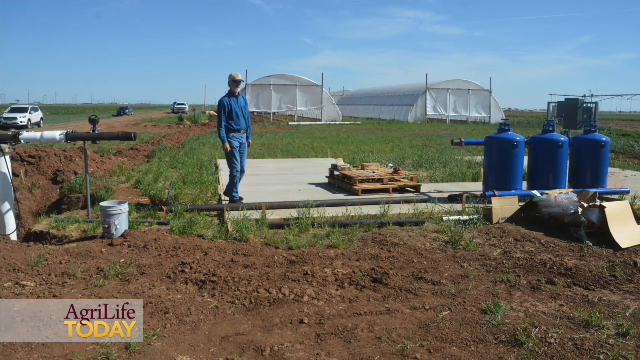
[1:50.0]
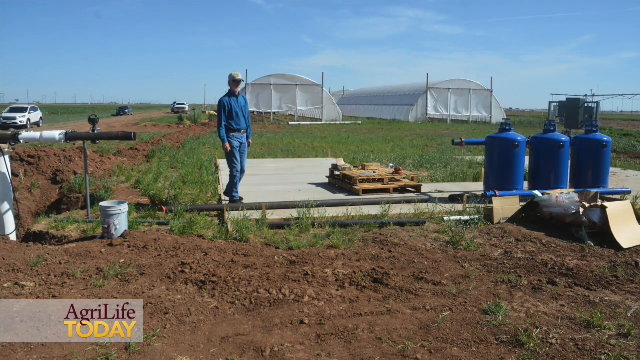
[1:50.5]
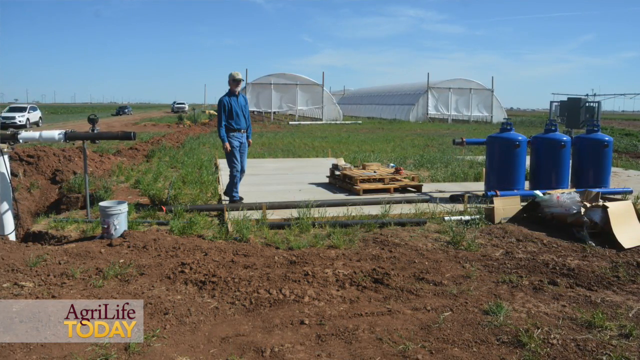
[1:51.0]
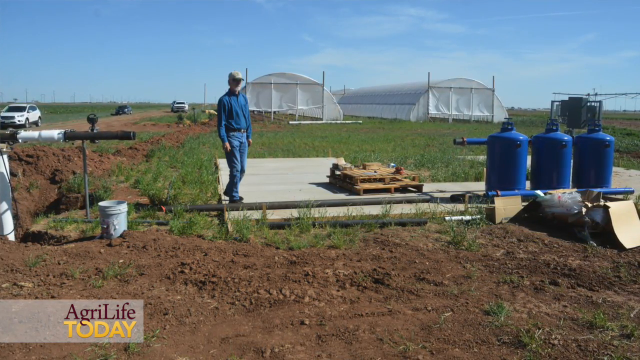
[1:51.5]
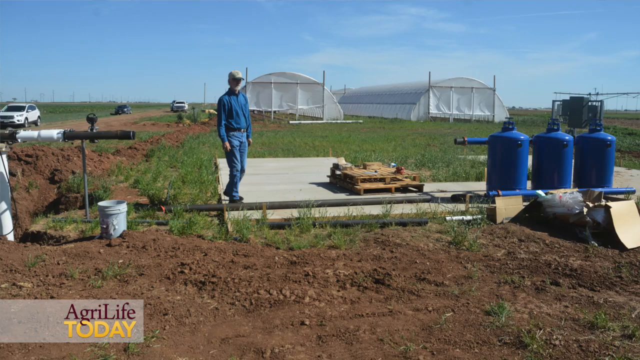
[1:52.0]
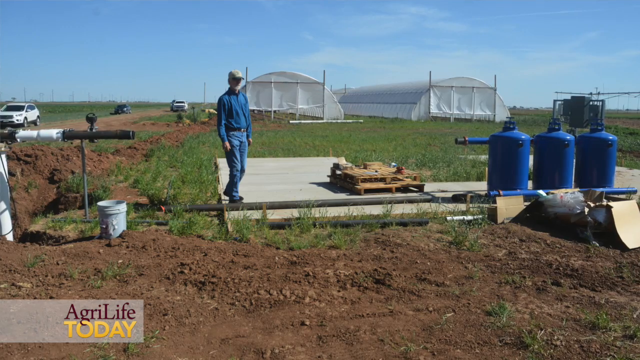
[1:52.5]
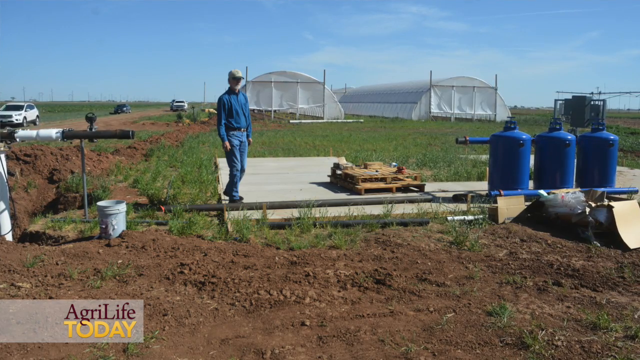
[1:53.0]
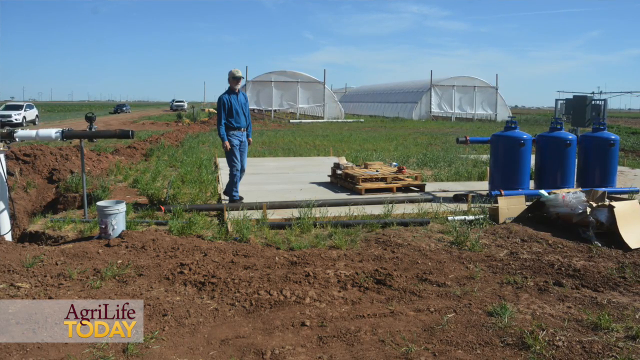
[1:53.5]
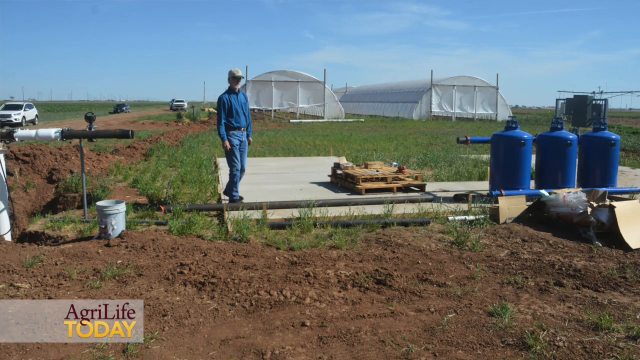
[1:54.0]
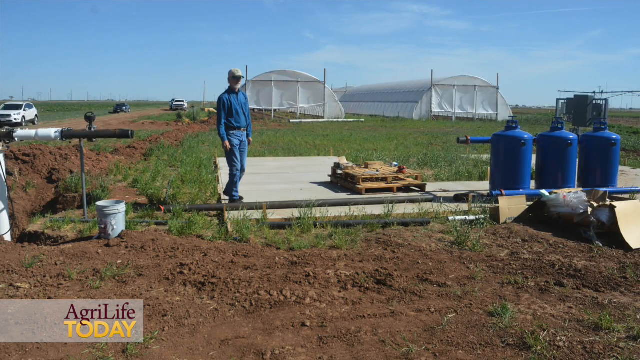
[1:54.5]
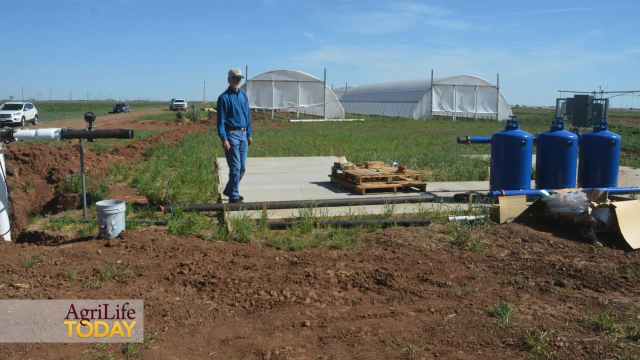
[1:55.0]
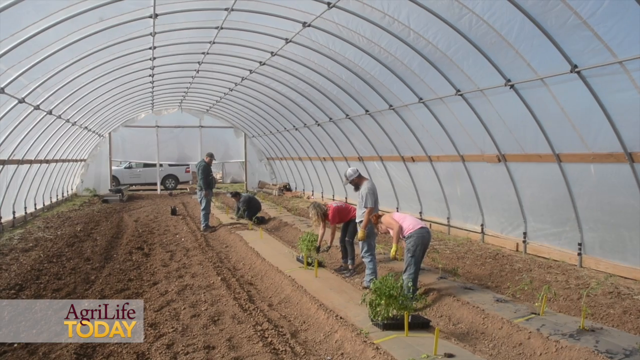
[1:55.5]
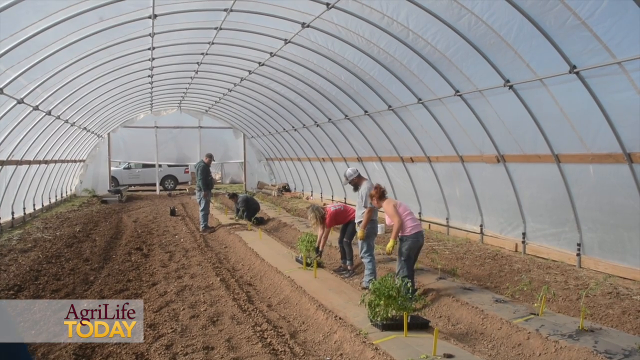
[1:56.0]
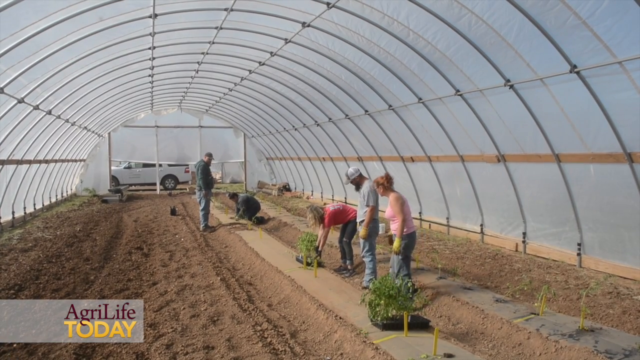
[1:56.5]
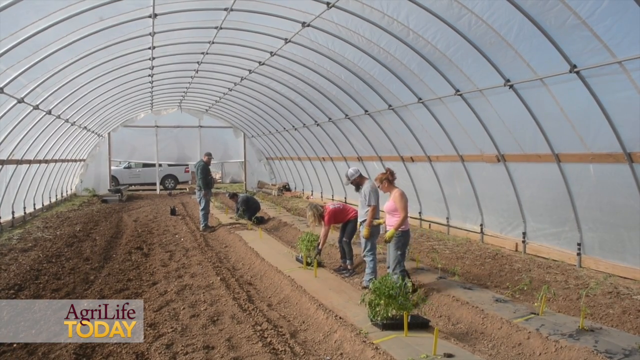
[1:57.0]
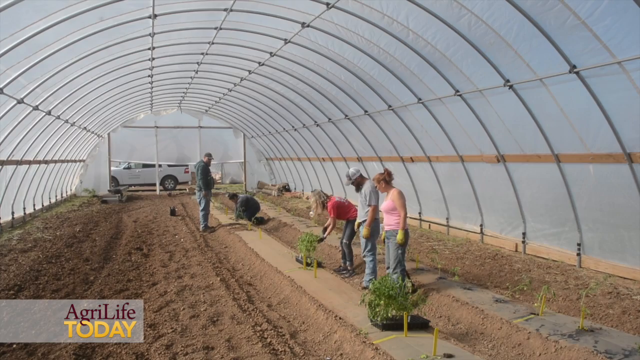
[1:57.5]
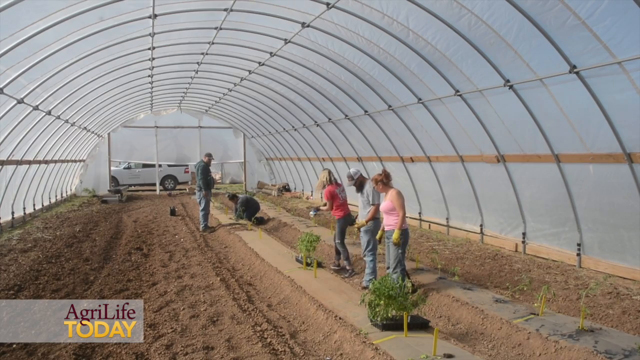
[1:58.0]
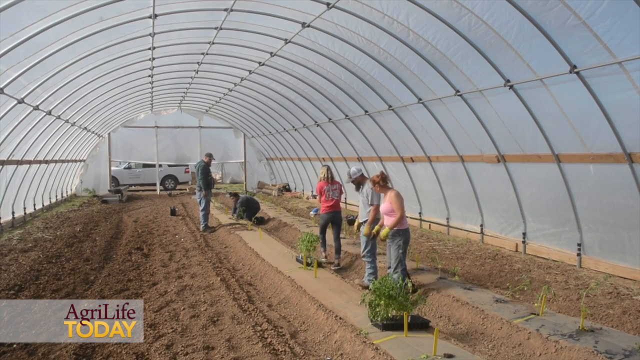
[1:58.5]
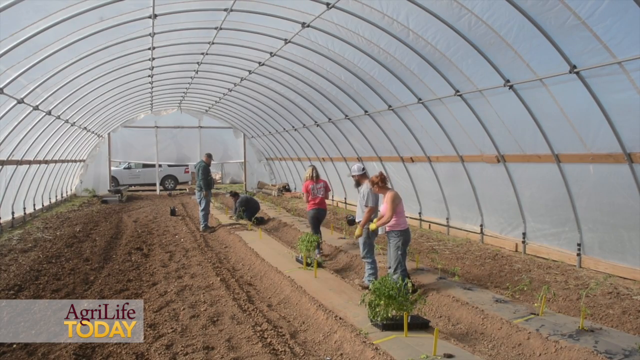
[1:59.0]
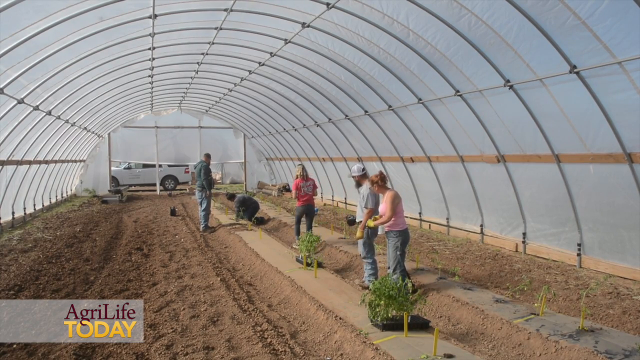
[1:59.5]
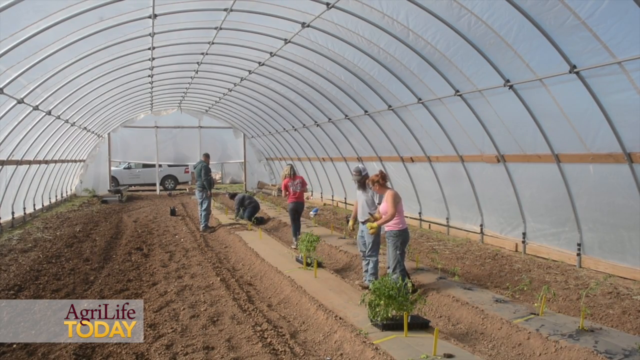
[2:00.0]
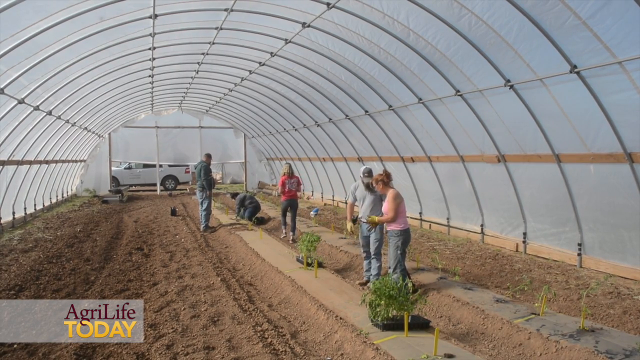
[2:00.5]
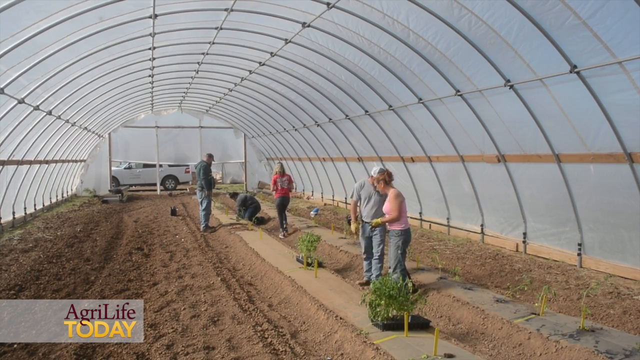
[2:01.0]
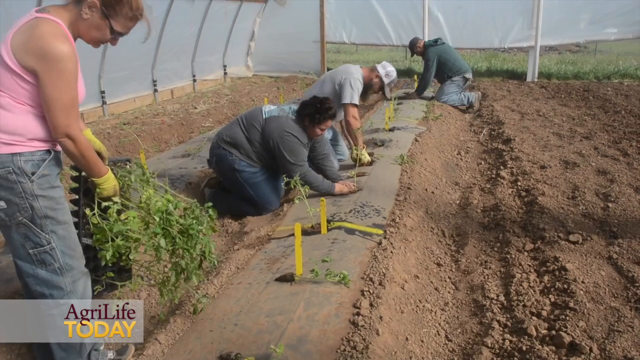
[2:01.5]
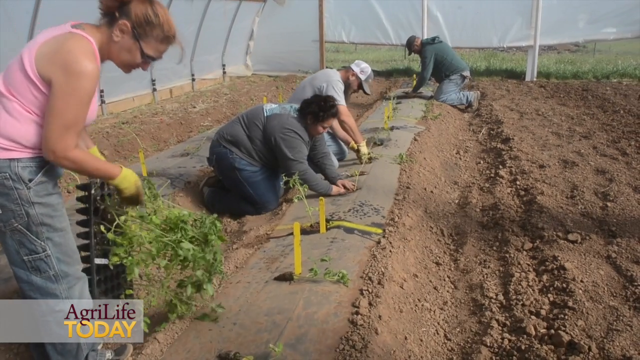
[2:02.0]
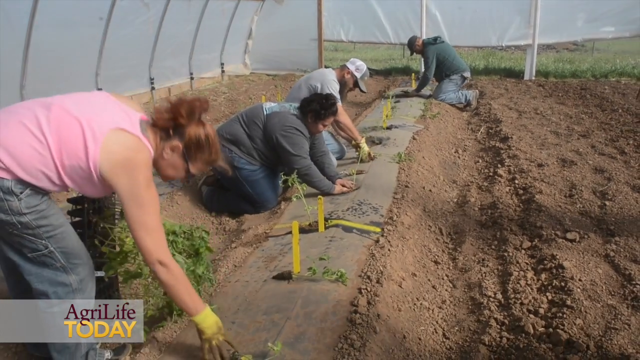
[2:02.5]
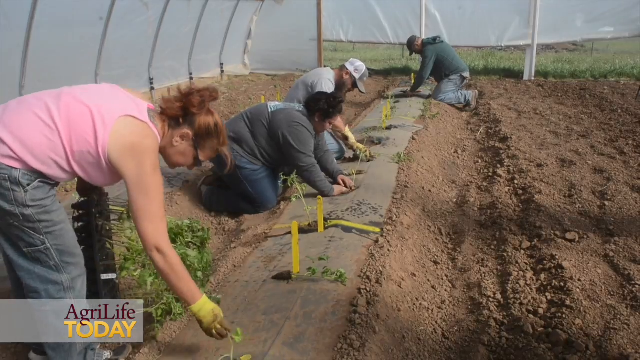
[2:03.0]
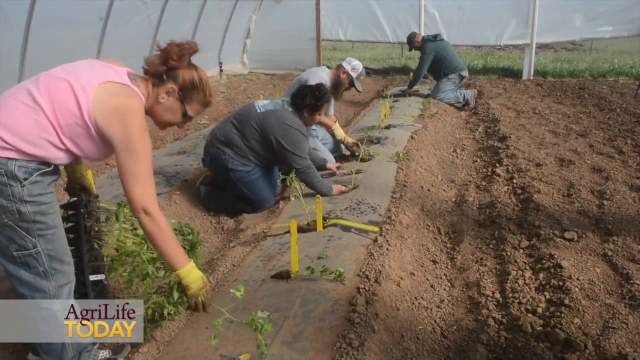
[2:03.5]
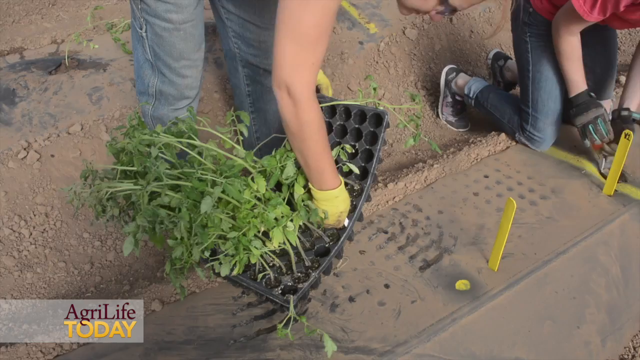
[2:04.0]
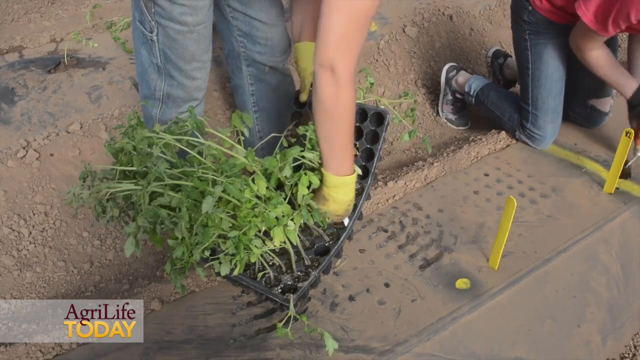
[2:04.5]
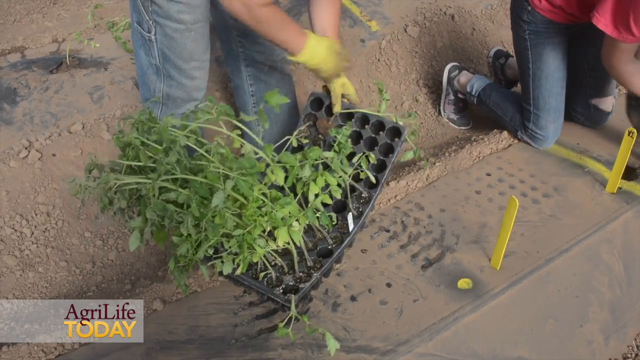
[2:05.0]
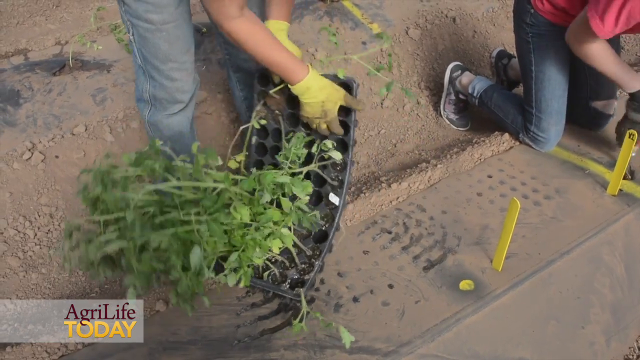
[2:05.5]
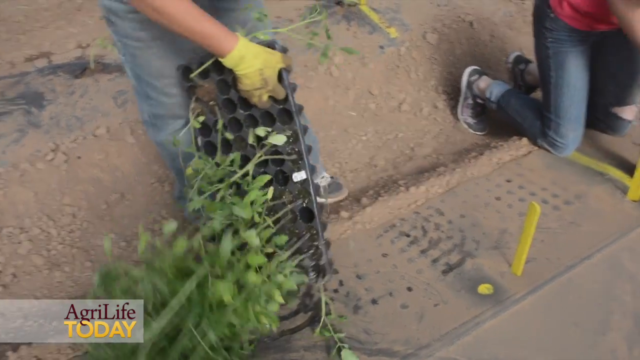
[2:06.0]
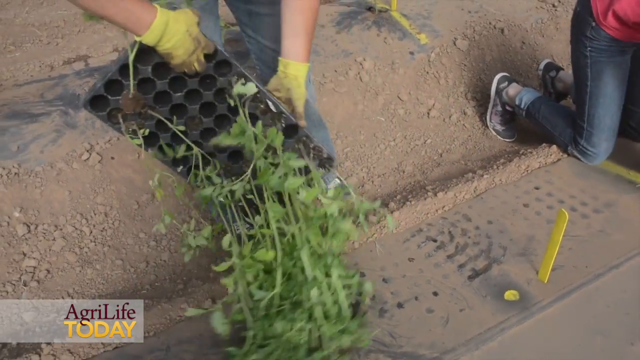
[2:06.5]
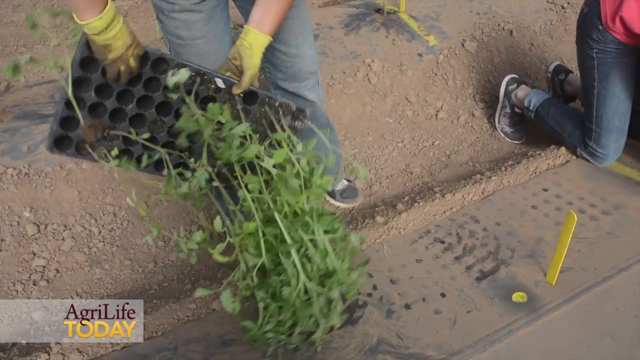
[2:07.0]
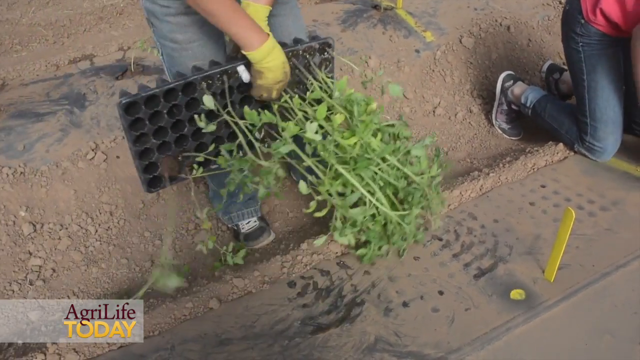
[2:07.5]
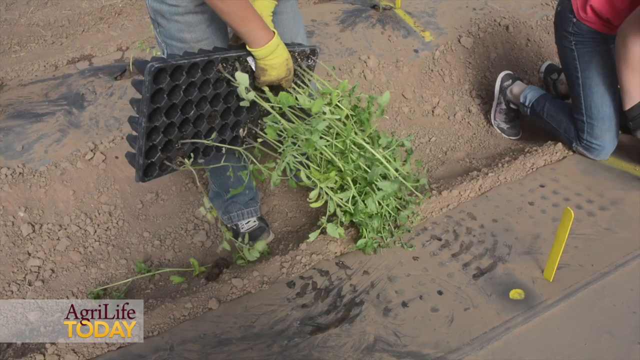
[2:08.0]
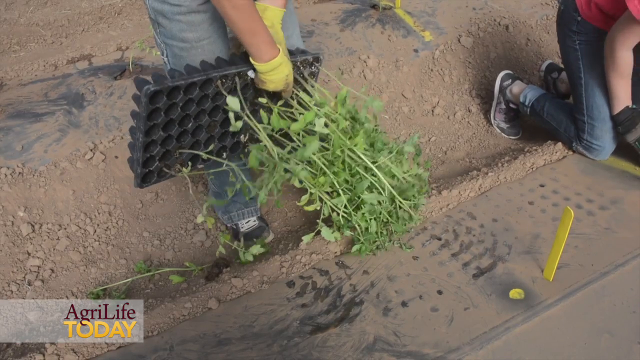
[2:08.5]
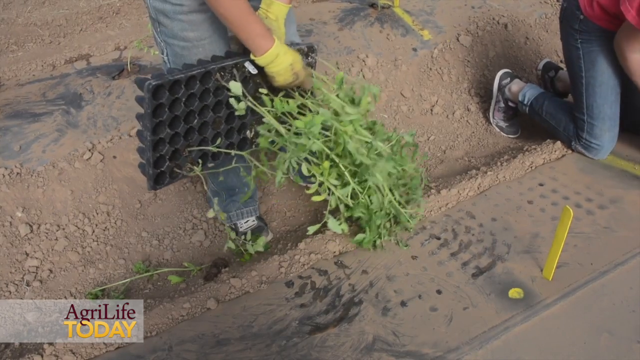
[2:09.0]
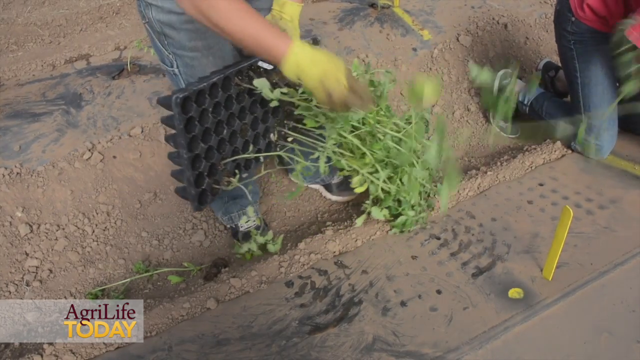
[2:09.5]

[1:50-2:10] A man stands on some kind of white flooring. He is an older man with white hair and a white beard, wearing a baseball cap, blue jeans and a blue shirt. The video then shows five people who appear to be planting tomato plants inside one of the greenhouses: three are women and two are men. One woman wears a pink vest and jeans, and another wears a red t-shirt and jeans. One of the women, wearing yellow gloves, pulls the plants out of their little pots and plants them in the soil in the greenhouse. The video then switches back to the man standing outside on the flooring, with three very large metal canisters next to him.